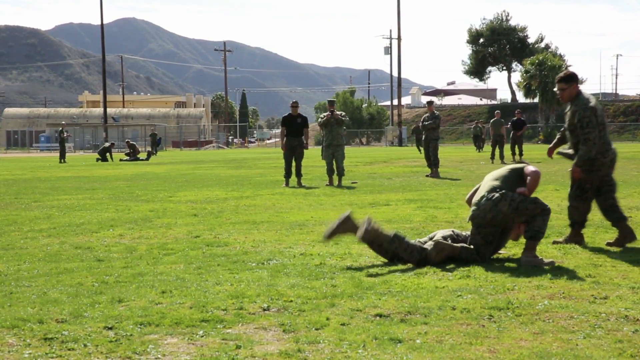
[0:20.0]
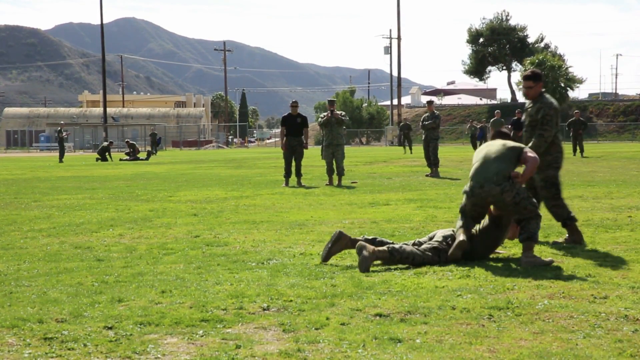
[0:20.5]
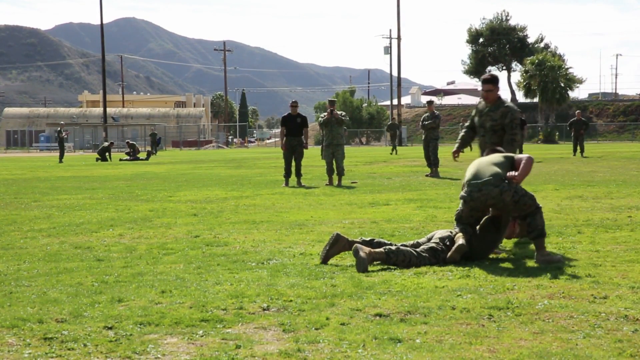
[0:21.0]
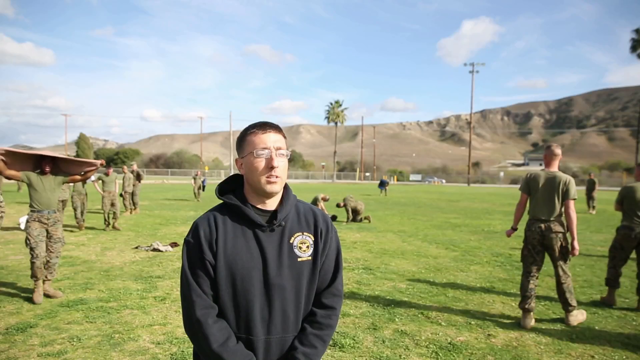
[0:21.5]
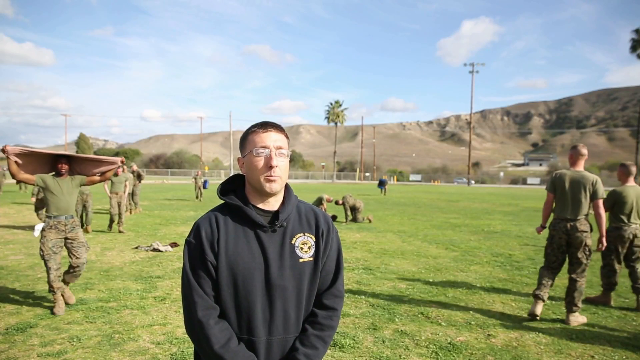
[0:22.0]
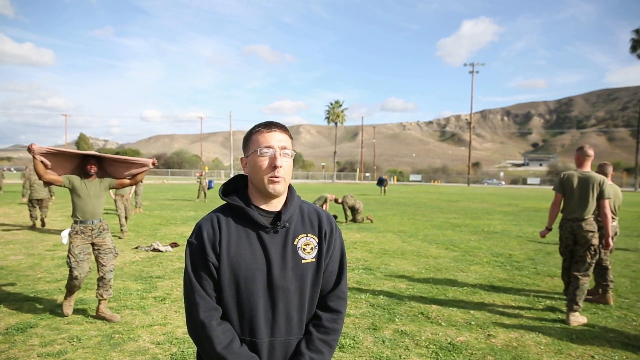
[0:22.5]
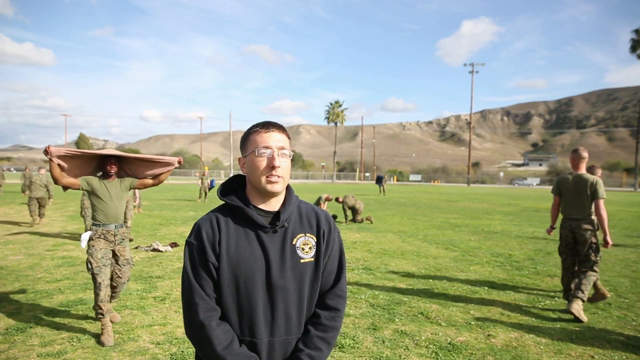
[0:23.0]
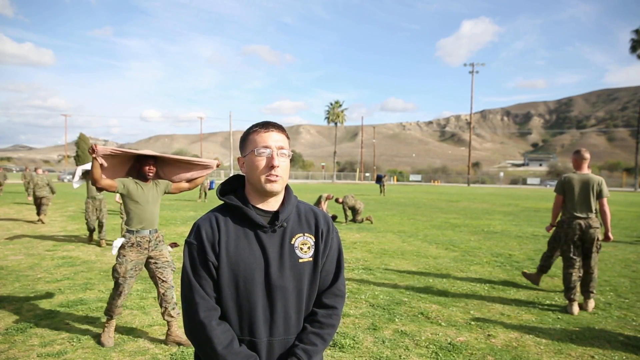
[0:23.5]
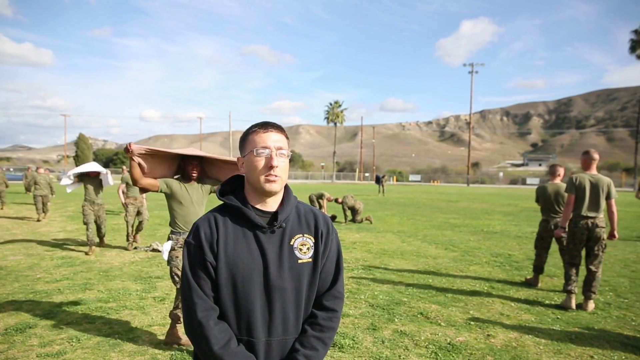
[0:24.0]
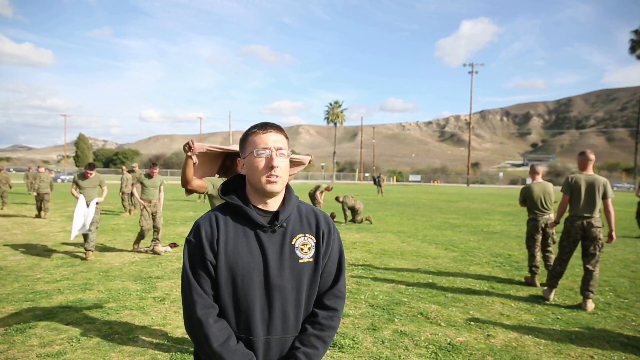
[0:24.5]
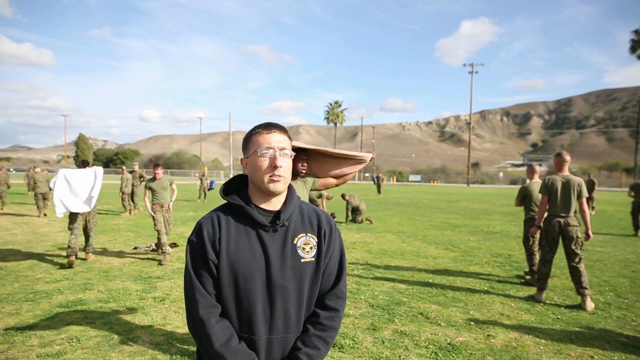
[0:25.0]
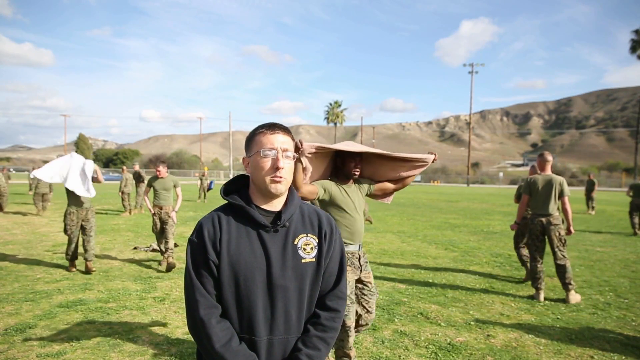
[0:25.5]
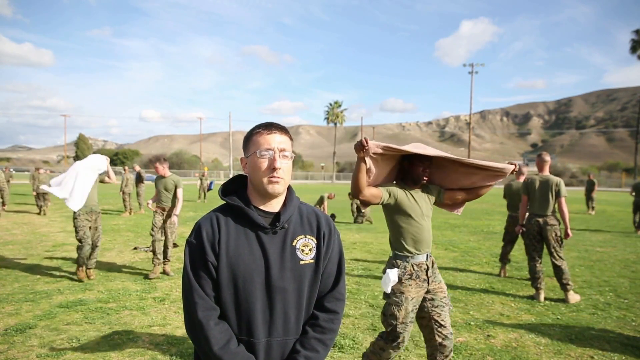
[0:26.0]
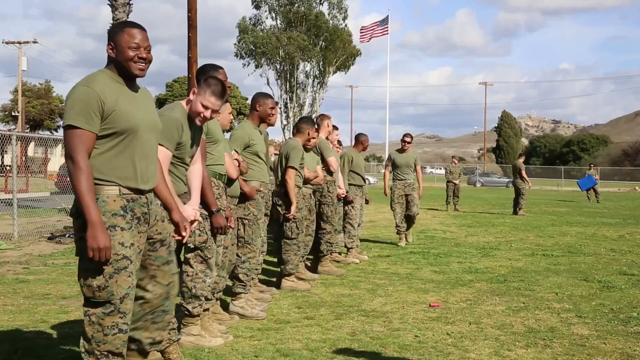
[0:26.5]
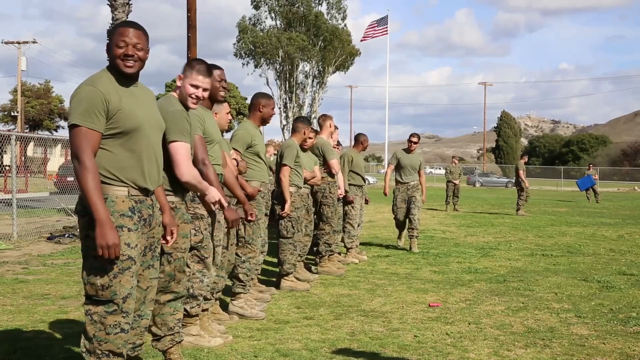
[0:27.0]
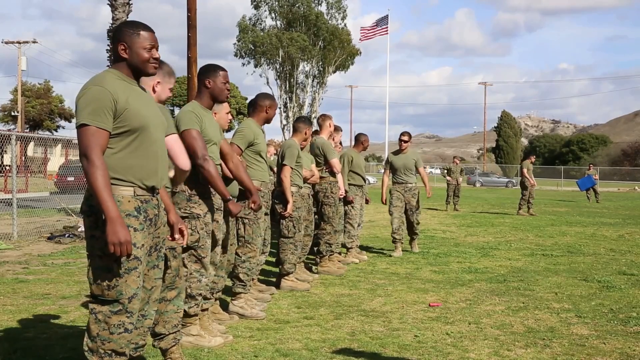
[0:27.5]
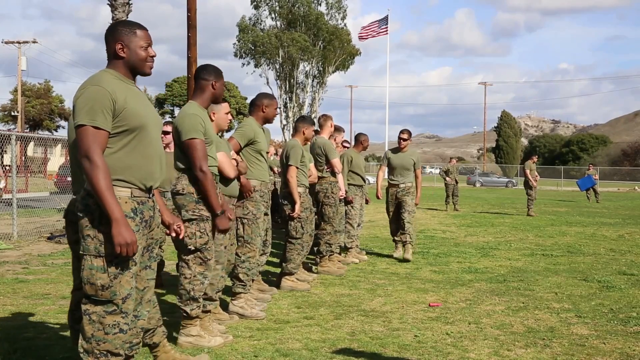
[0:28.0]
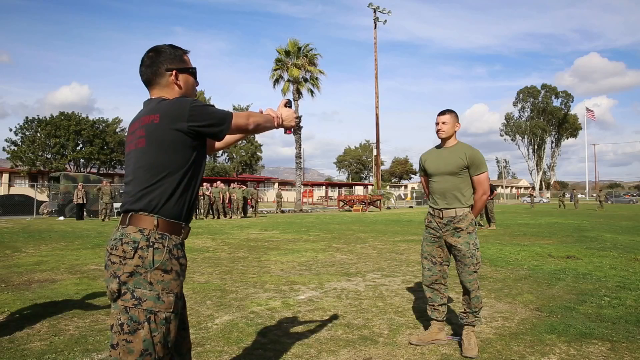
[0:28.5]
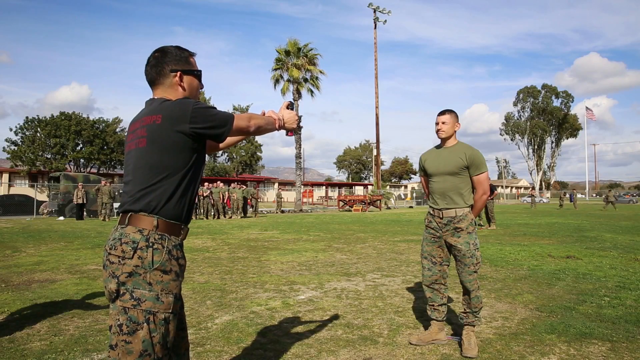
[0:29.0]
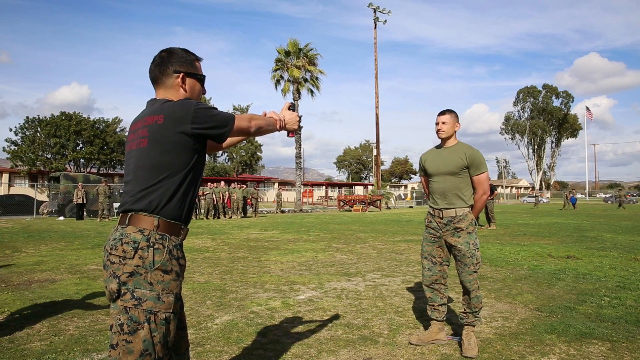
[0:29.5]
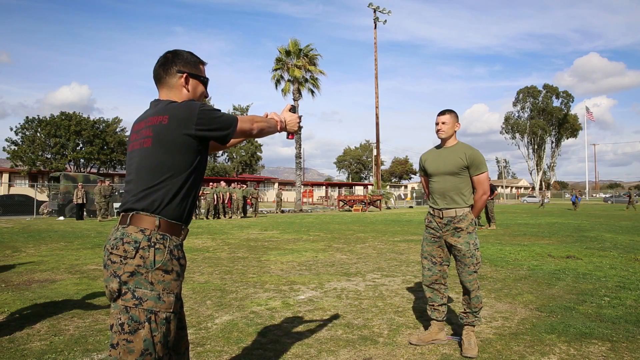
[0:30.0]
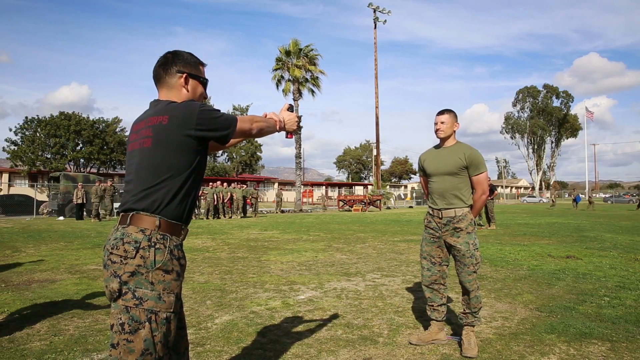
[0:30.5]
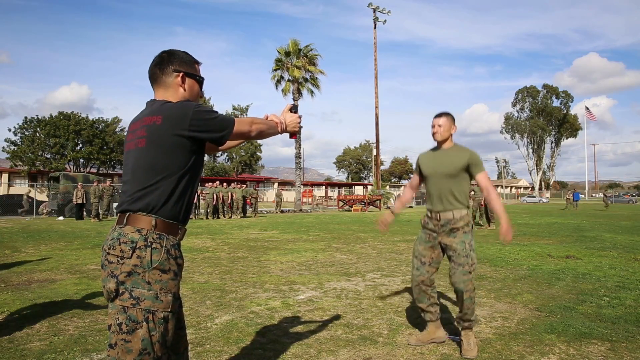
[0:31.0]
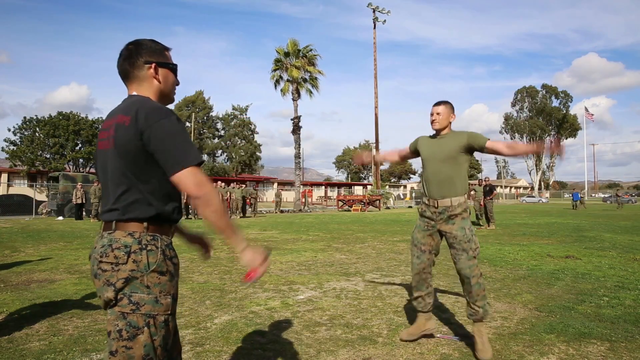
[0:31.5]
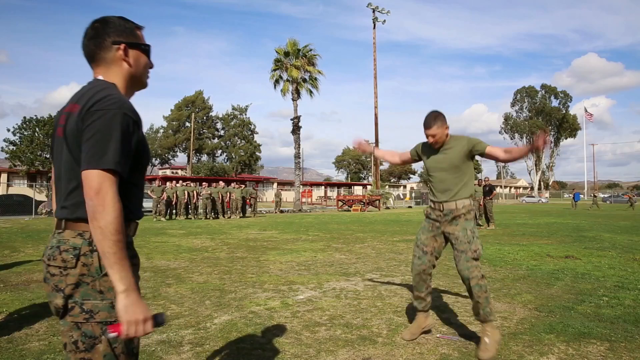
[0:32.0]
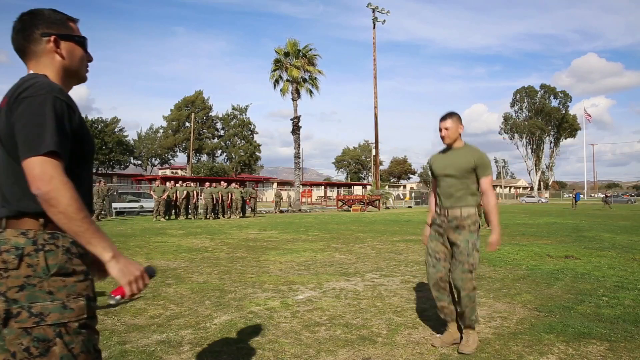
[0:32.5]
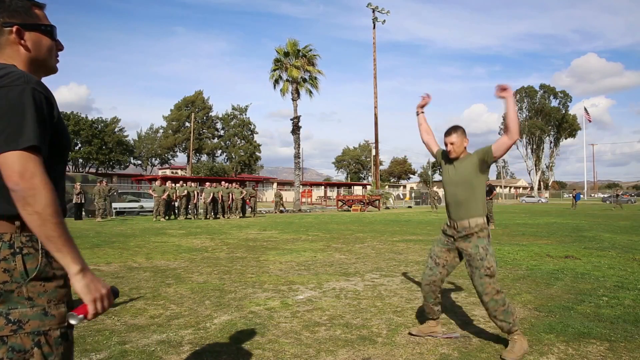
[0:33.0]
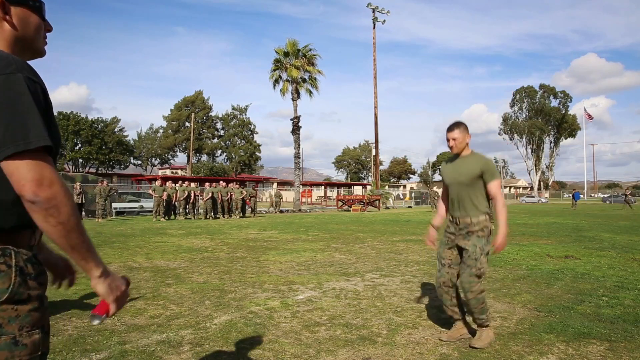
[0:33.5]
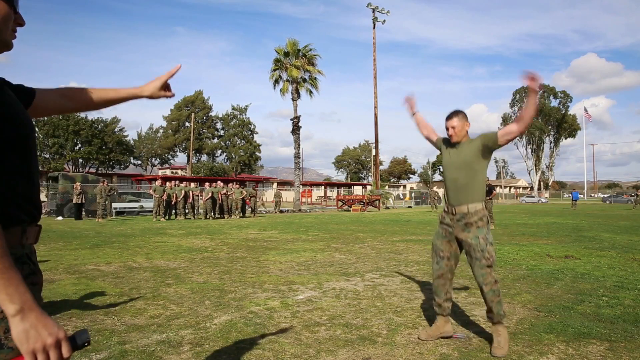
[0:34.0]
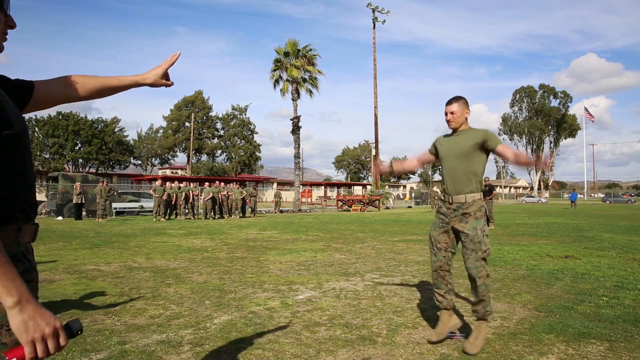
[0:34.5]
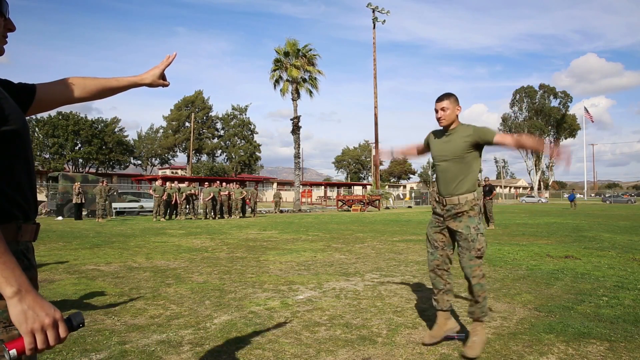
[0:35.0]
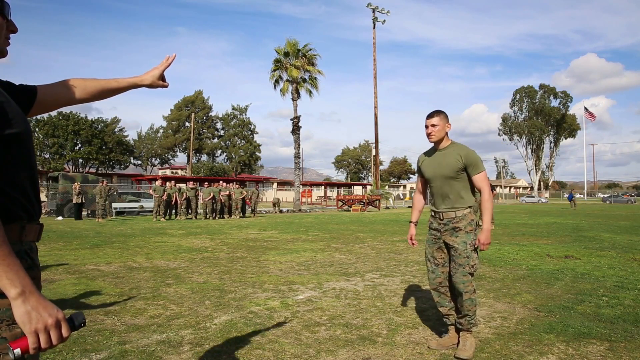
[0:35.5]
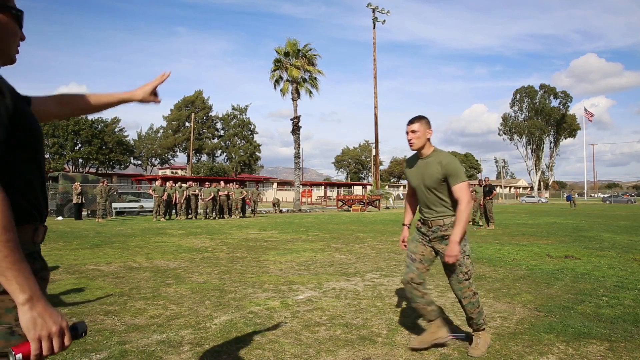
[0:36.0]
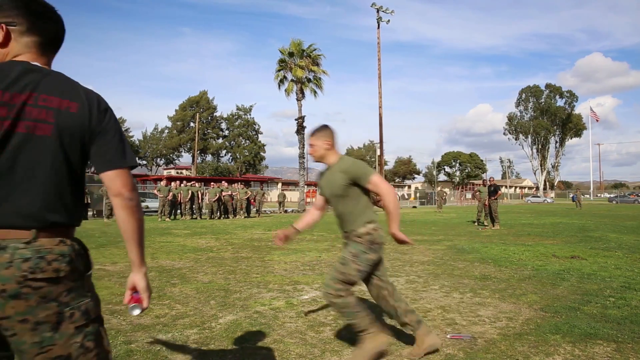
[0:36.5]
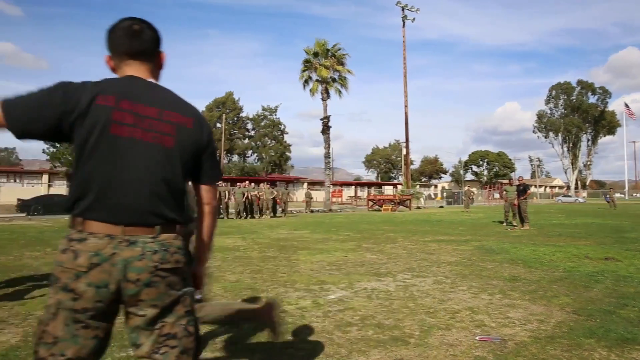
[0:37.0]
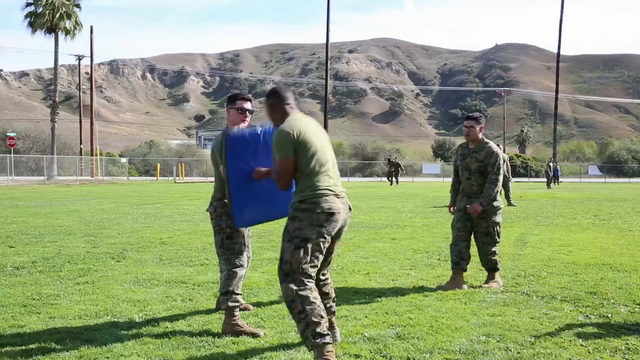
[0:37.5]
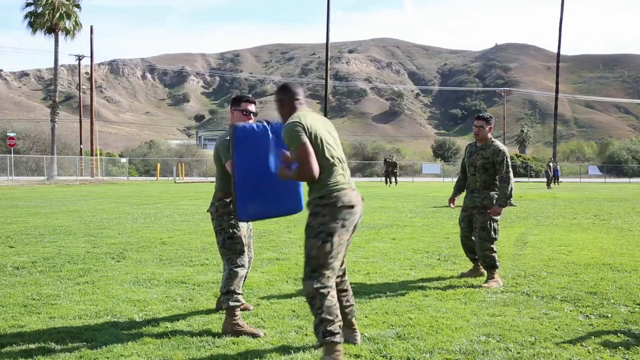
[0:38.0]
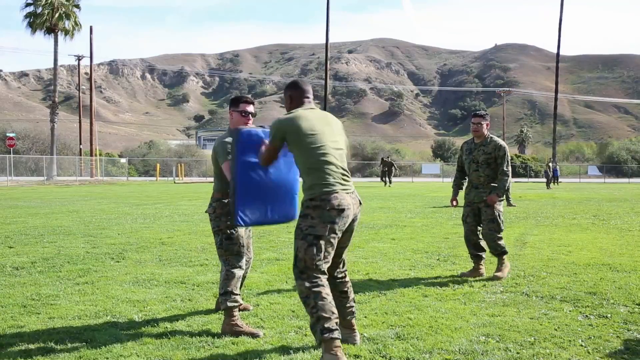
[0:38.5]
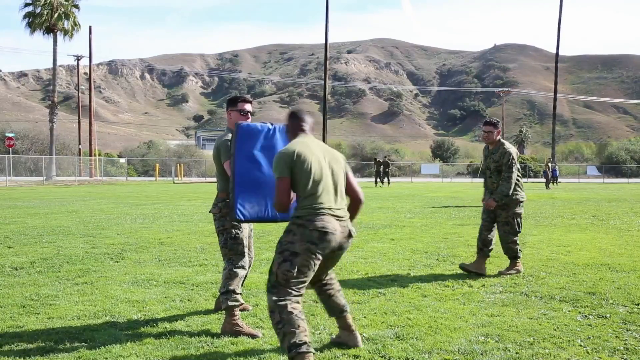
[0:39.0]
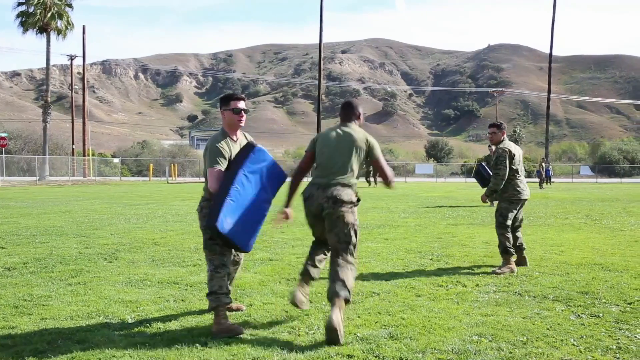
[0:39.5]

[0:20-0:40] After throwing the other Marine to the ground, the Marine kind of puts his knee on his back so he does not get up. The video returns to the person in the black hoodie looking at the camera, apparently narrating, with other training activities in the background. On the left, a couple of recruits have some sort of blanket, covering or towels over their heads while he talks. Other scenes from the day follow. In one, at least 12 to 15 Marine trainees are lined up facing to the right while what appears to be one of their commanders gets ready to pass by; they look serious, but it seems to be a somewhat light-hearted event. The commanding officer is in the background and walks toward the camera, while other Marines are involved in other training activities behind them. The field looks like it is located in some type of neighborhood: there is housing in the back and cars are parked along the street. On the field there is a flag and a flagpole, along with some trees and mountain ranges in the background. The next scene appears to be the live-action shot of the still image from the beginning. A recruit on the left, wearing camel pants, a belt, a black shirt with writing on it and glasses, with a short buzz cut, holds some sort of spray or propellant and sprays it directly into the eyes of the recruit on the left, who has his eyes closed once it is sprayed in his face. That recruit then does jumping jacks, counting them off, and the other Marine instructs him to run off. In another scene, a recruit on the left holds some sort of mat and a recruit on the right punches the mat, then runs off to do another activity.